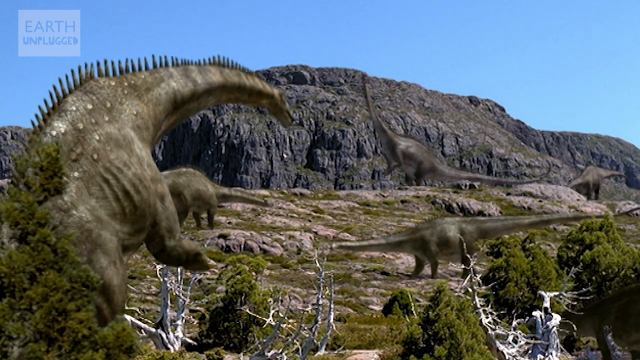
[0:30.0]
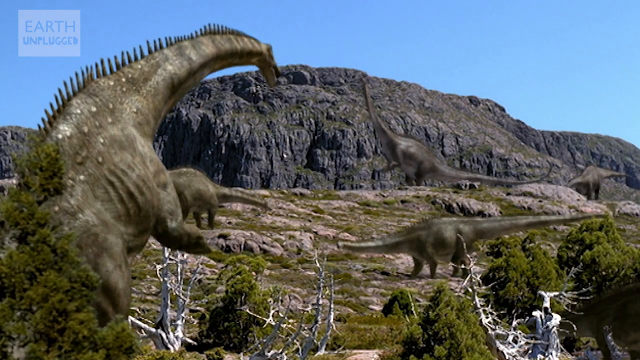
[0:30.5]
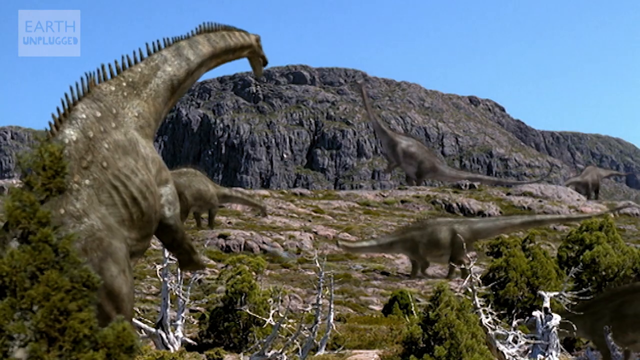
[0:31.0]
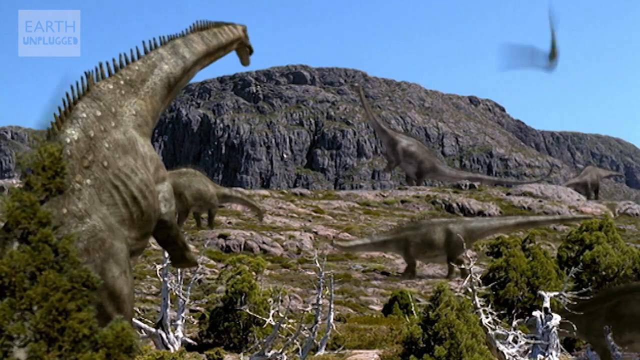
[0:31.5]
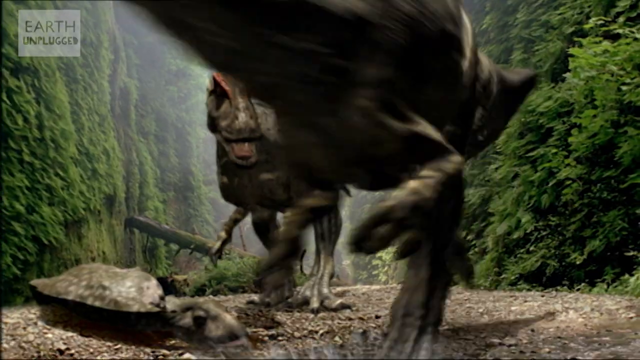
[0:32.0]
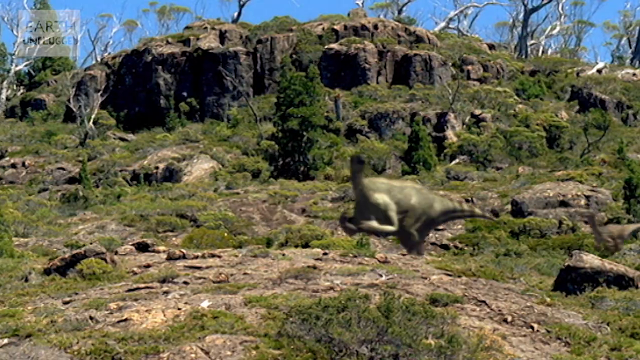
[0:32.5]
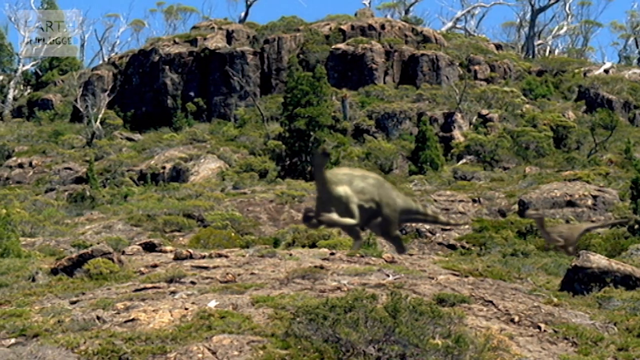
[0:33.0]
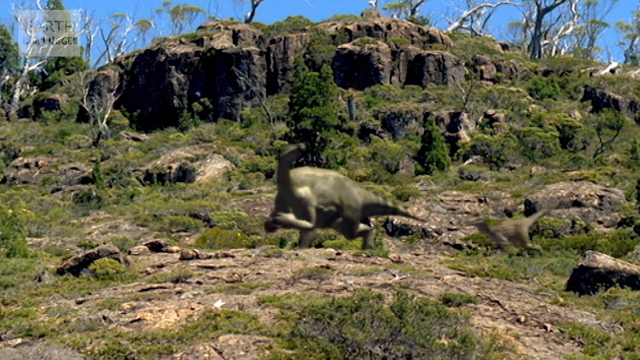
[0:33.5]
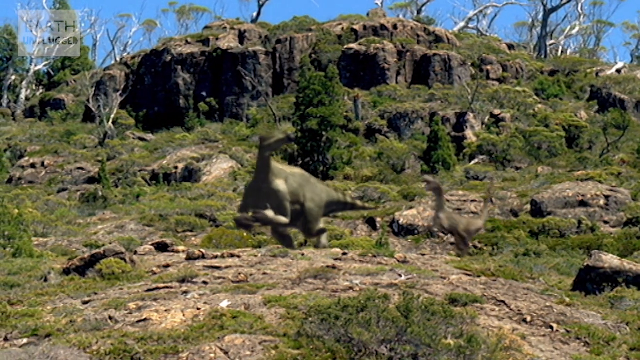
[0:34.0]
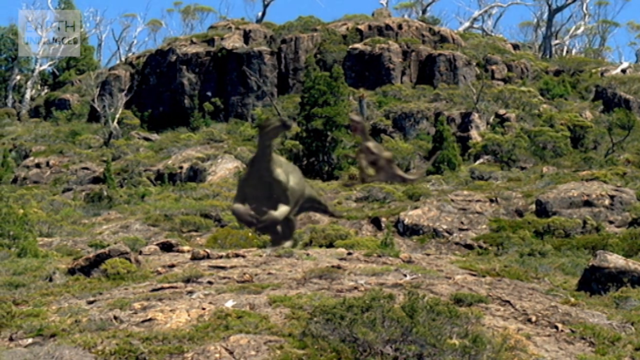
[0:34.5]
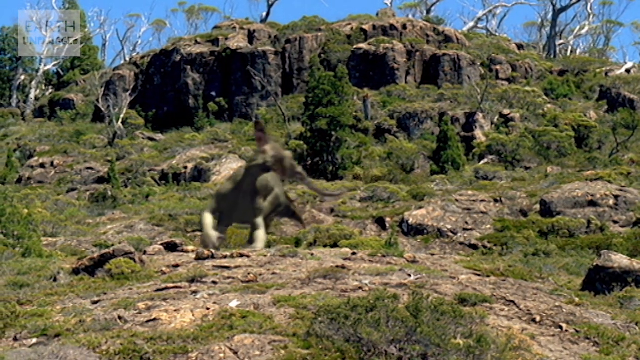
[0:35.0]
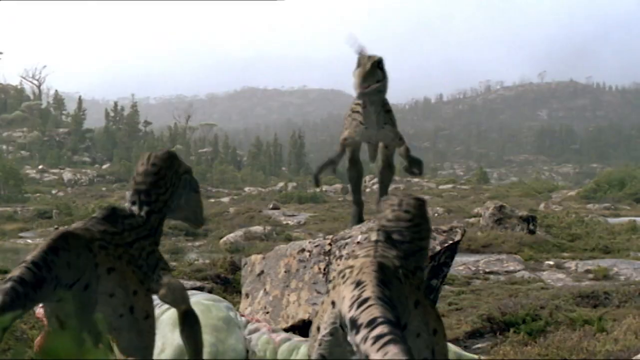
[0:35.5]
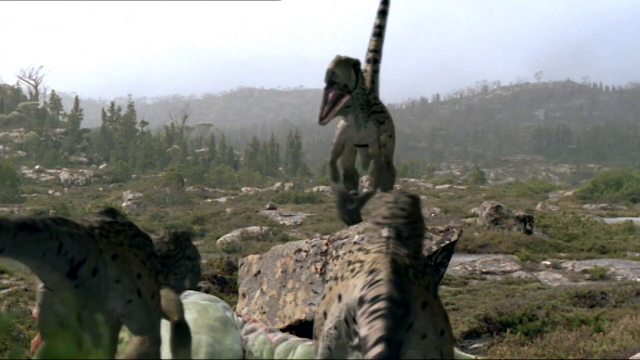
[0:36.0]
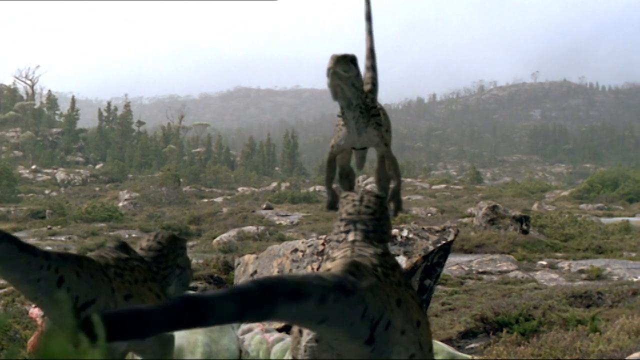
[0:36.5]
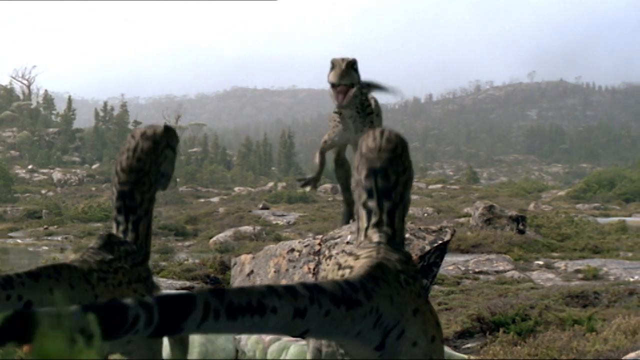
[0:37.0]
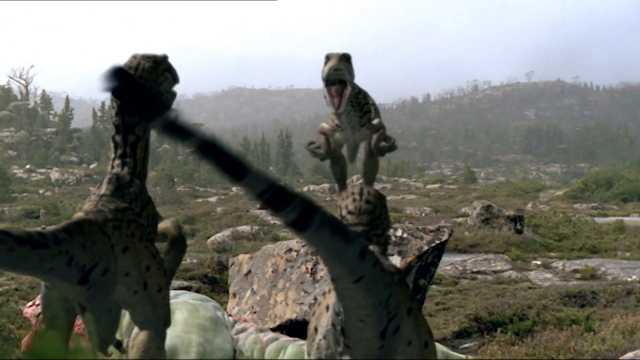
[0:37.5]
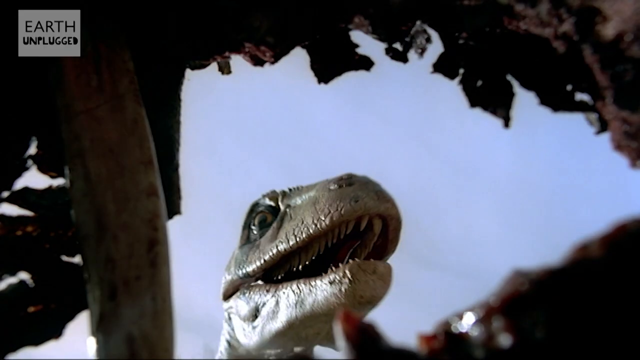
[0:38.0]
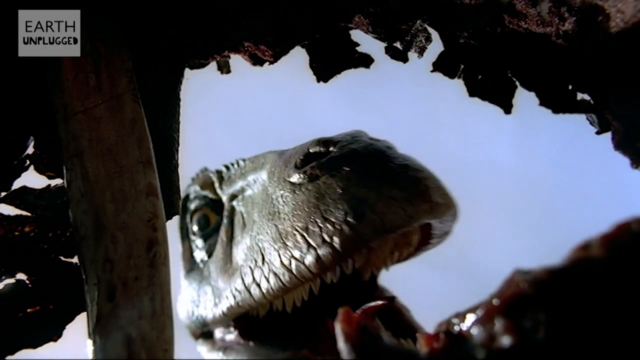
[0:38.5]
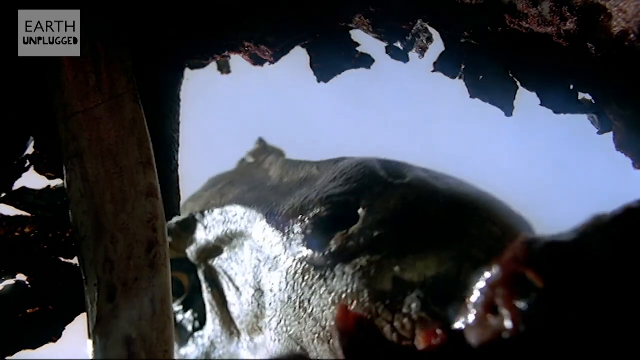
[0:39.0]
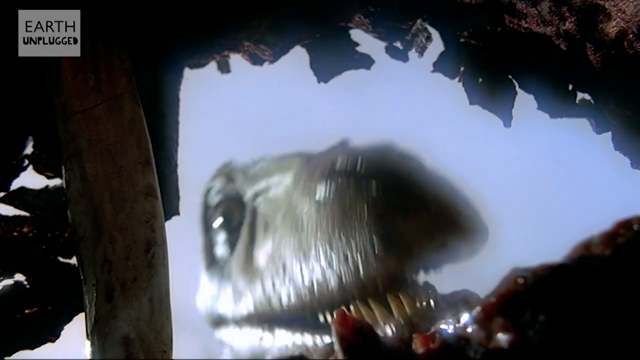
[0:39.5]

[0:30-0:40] The group of about four dinosaurs continues eating as one lifts its head, with an Earth Unplugged logo on the top. Next, two dinosaurs are together and one starts to run. One dinosaur chases another through the green hills of the mountain, then jumps on the other dinosaur's back; the small dinosaur looks like a velociraptor and looks like it is hunting the other dinosaur. Then a group of three apparent velociraptors appears. One, elevated as it stands on a rock, seems to be communicating with the others: it moves its mouth as if talking, its tail goes up and down, and it waves its arms a little. The other two listen intently and jump up and down excitedly, their tails up in the air and wagging. Then what looks like a velociraptor eats the carcass of an animal, most likely the dinosaur that was captured.